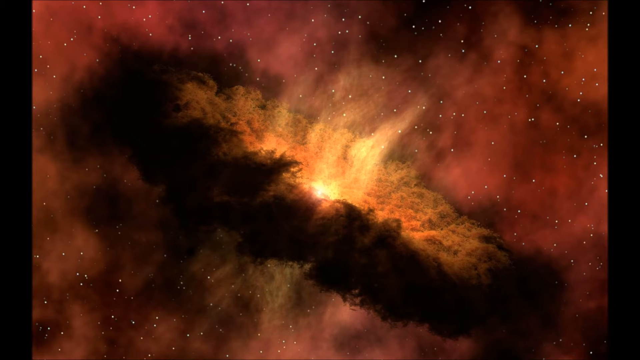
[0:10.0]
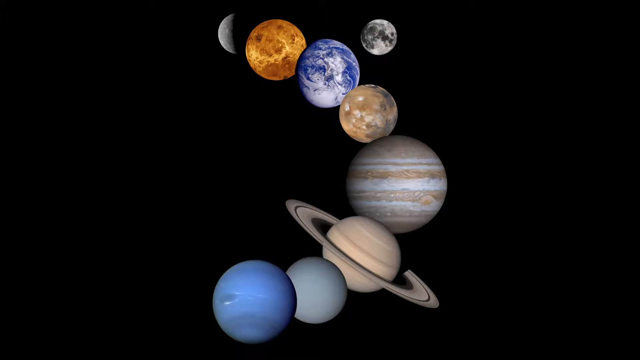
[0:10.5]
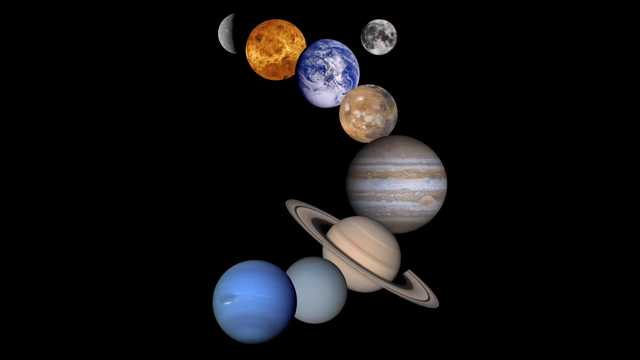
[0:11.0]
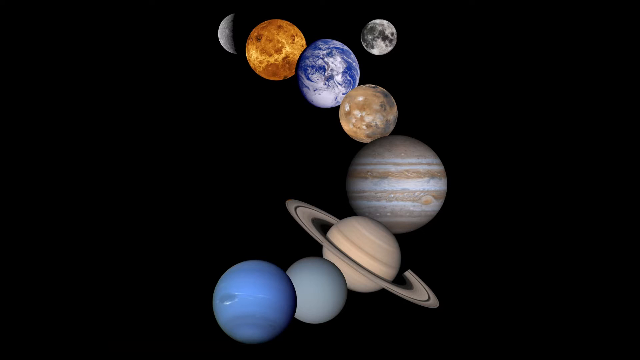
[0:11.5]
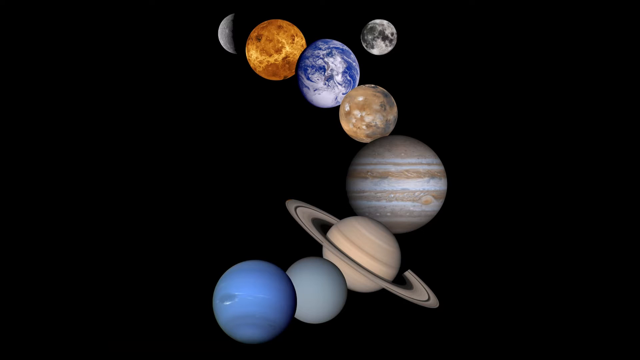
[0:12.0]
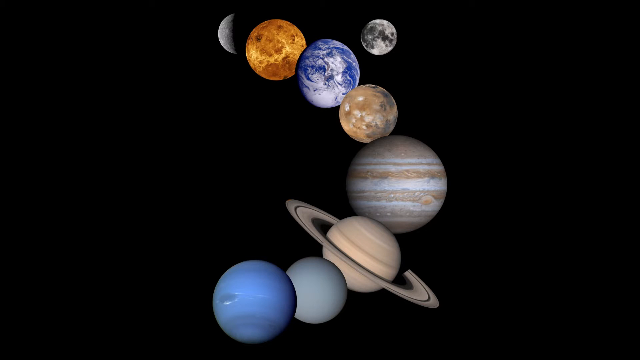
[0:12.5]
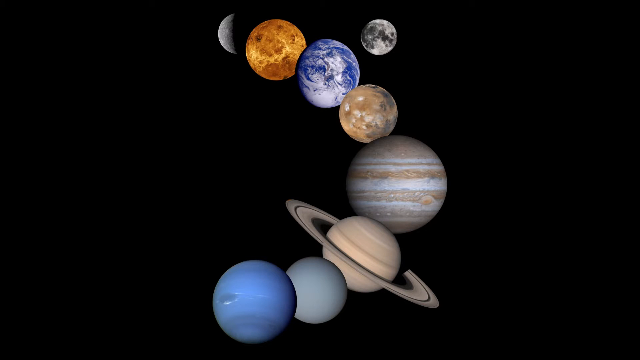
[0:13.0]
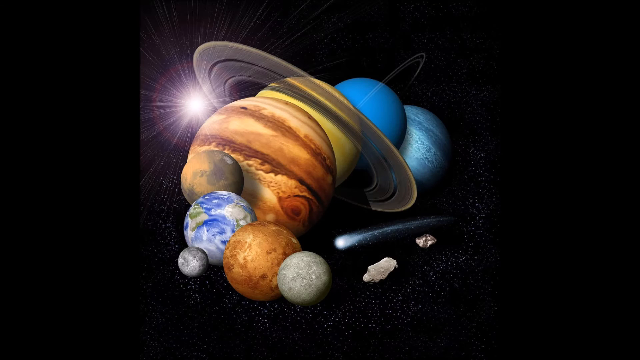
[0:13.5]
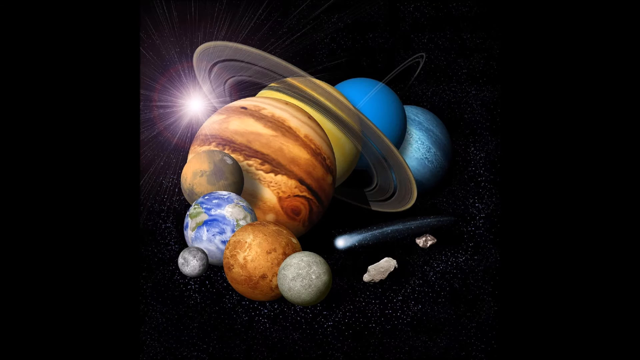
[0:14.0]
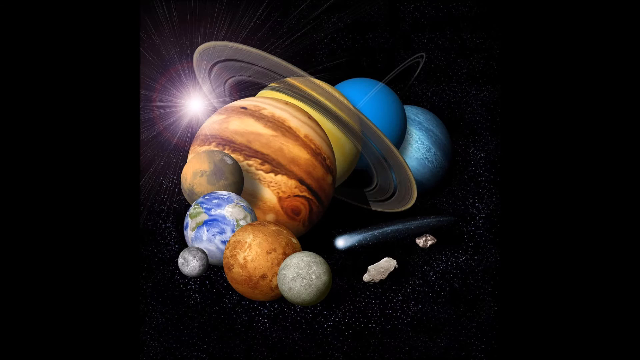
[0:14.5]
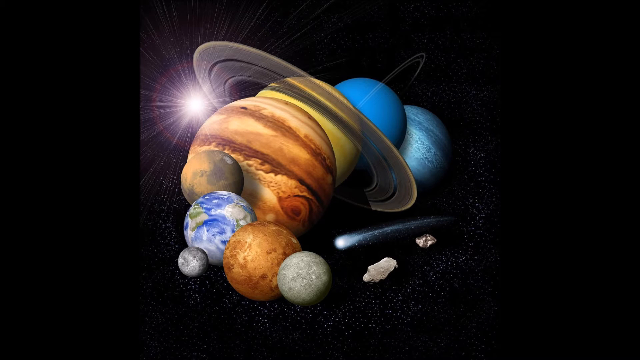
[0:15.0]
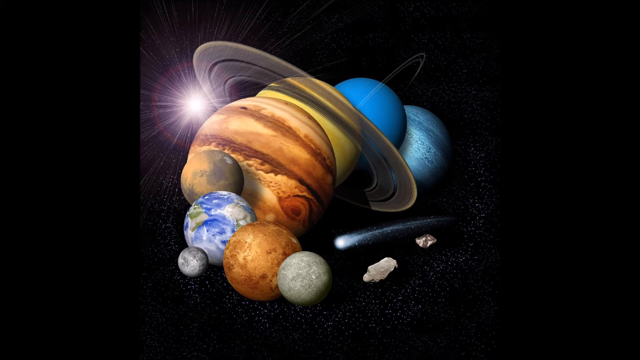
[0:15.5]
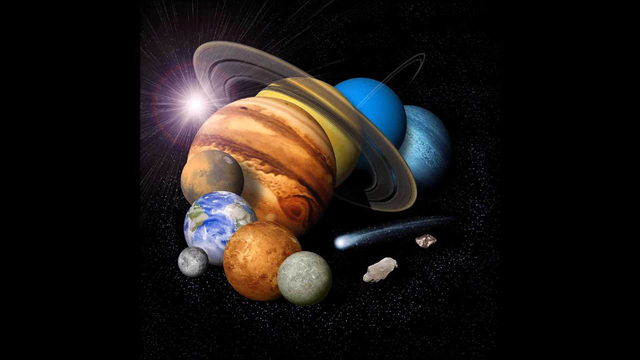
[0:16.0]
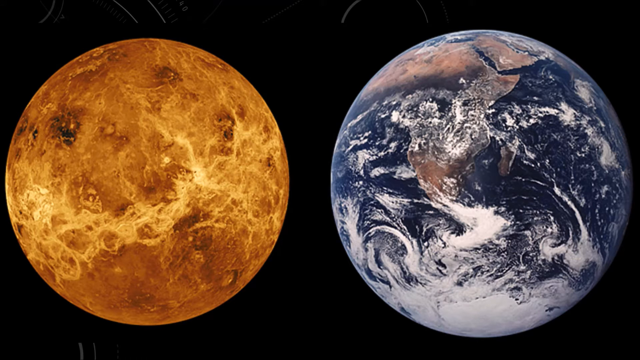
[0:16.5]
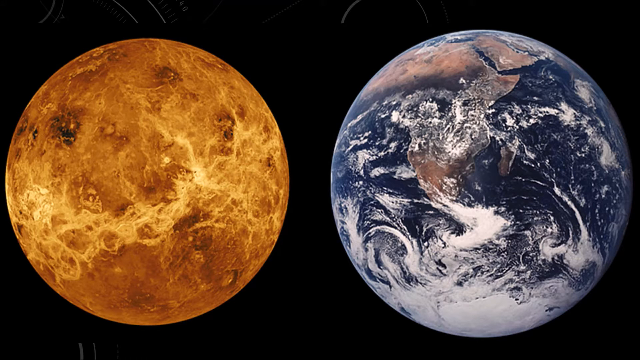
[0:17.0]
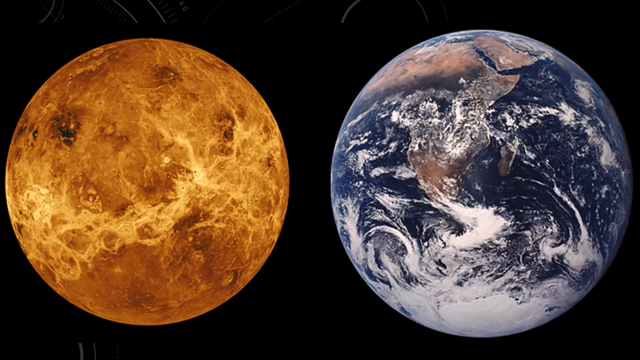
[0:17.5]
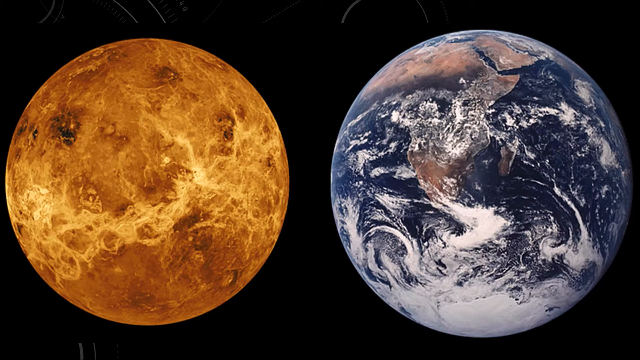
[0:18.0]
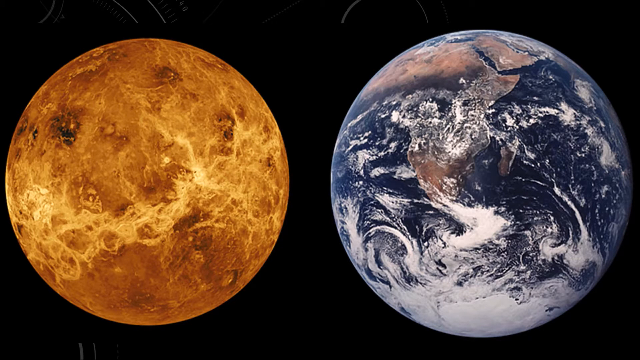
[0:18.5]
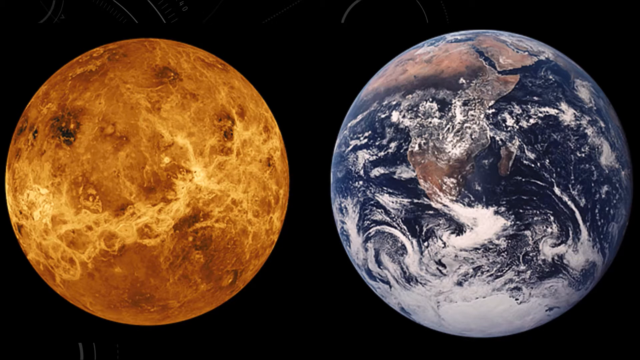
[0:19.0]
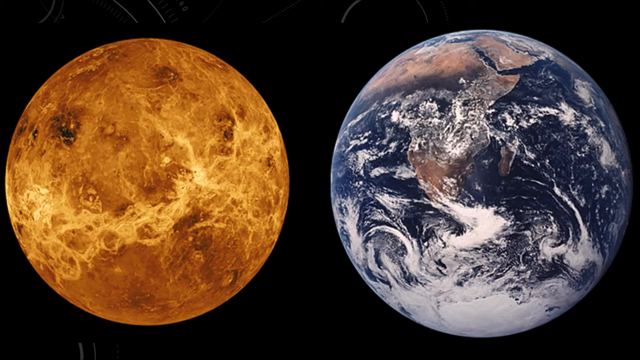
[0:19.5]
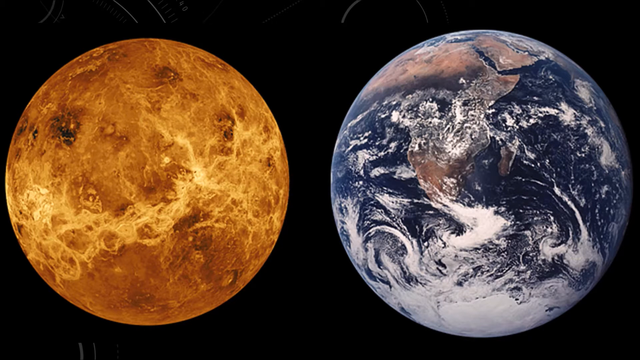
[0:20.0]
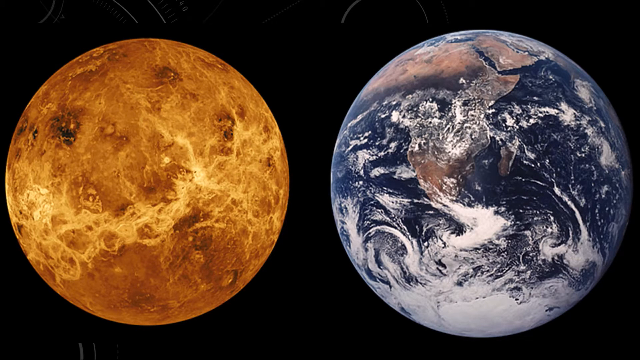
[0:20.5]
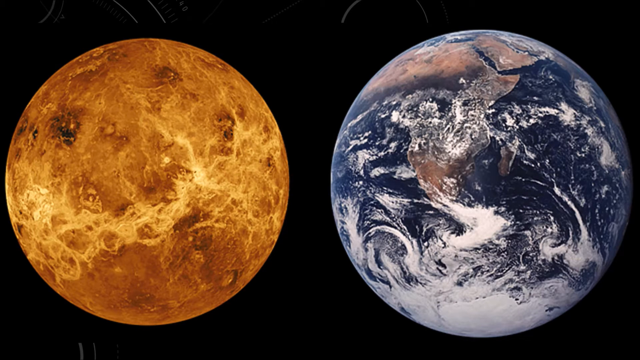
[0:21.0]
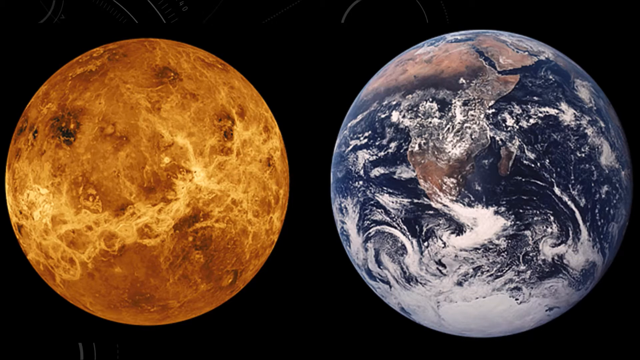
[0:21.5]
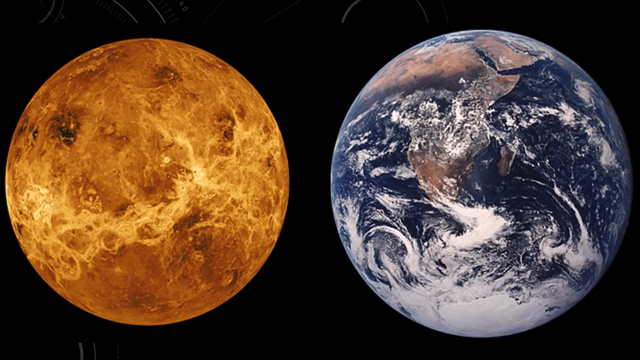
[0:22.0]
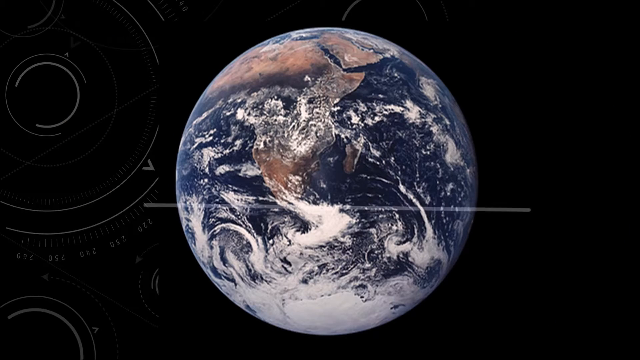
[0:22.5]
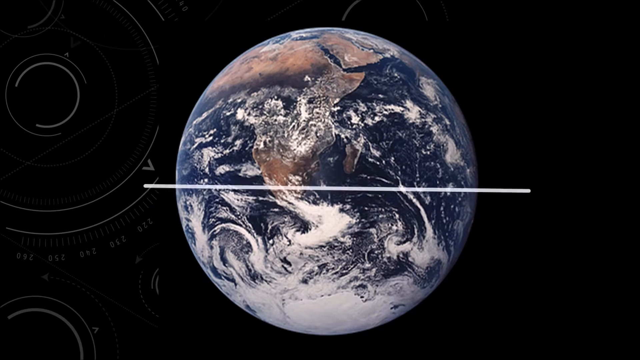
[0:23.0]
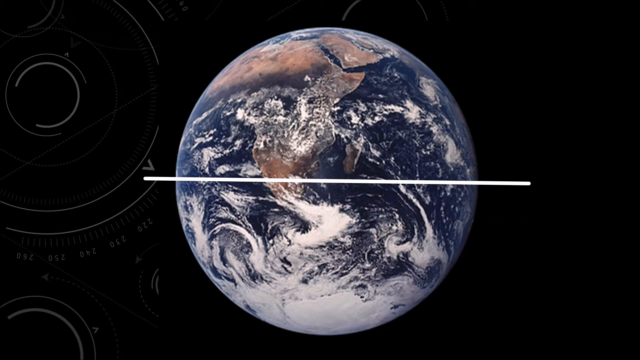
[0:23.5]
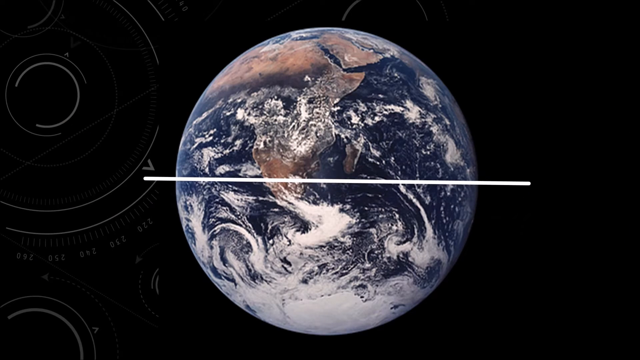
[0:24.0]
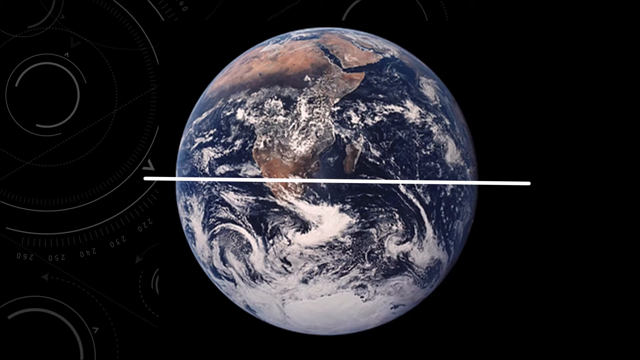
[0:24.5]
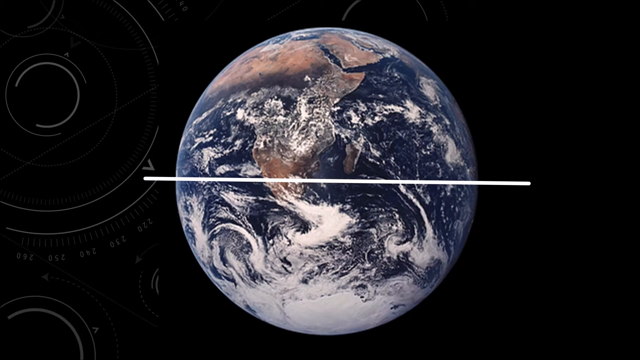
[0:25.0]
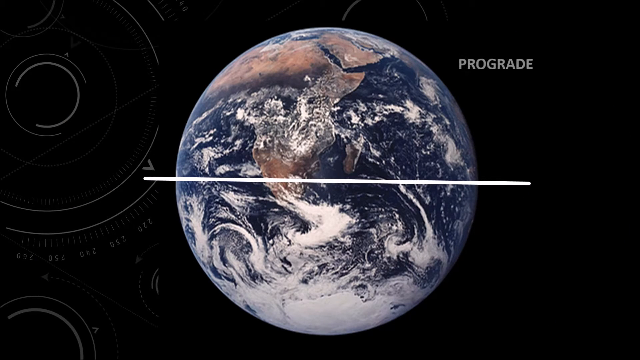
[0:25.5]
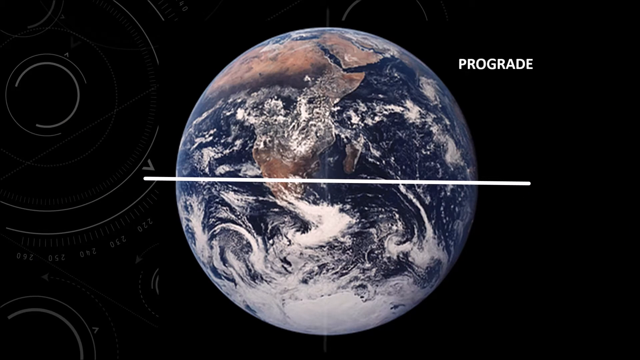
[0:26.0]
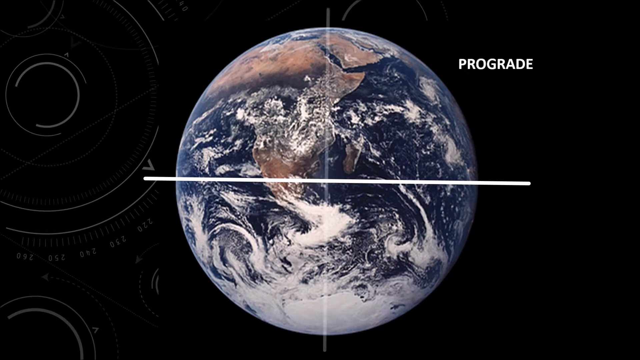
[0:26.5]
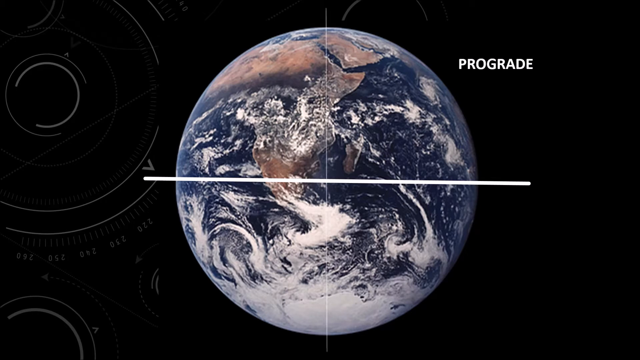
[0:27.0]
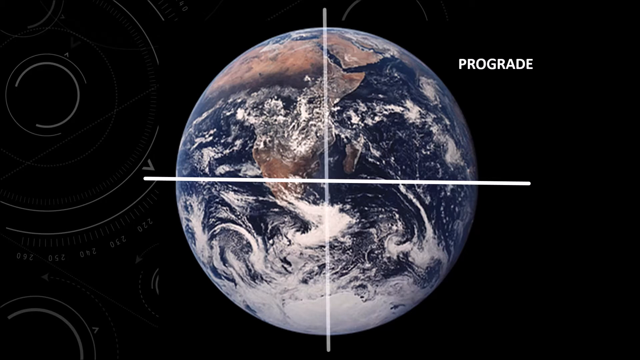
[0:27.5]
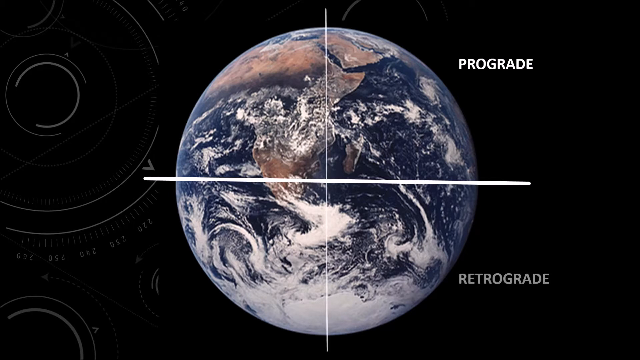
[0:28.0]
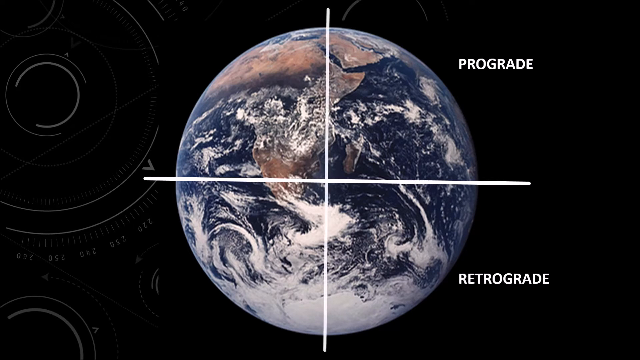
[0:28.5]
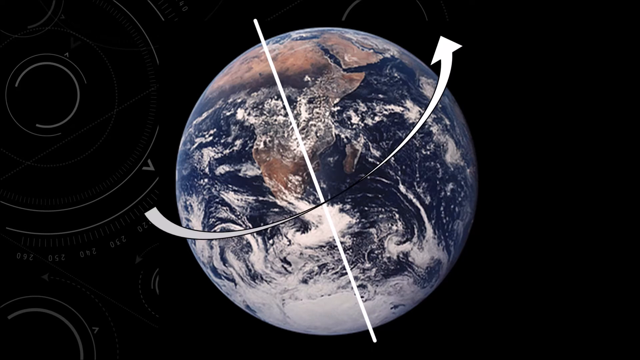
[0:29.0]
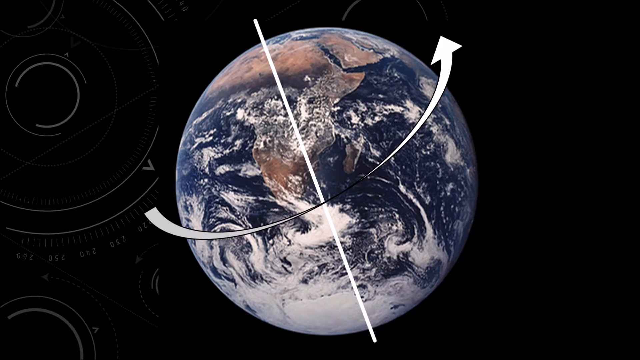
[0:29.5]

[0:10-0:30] More computer-generated pictures follow, including one with a solid black background showing a slanted line of planets that look to be the planets of our solar system: Venus, Earth, Saturn, Mars, Jupiter, Uranus, Mercury, Neptune, and Earth's moon. More pictures of these planets are shown. Next comes a picture of Earth on the right and, on the left, what looks to be Venus, since it is highly orange, yellow and brown. Then a picture of Earth appears with two white lines across it, running up and down. In the upper right-hand corner is the word "prograde", and underneath it is "retrograde". The entire video is computer generated and rectangular in shape, and no humans or animals are present.